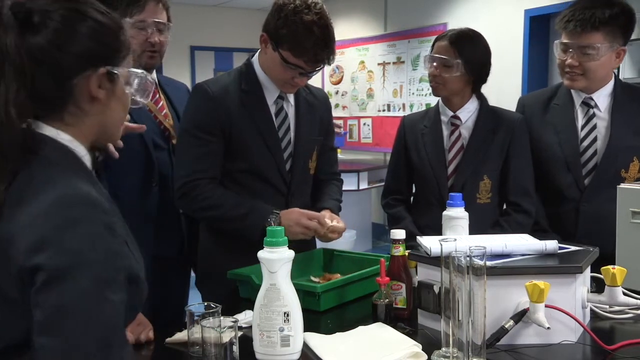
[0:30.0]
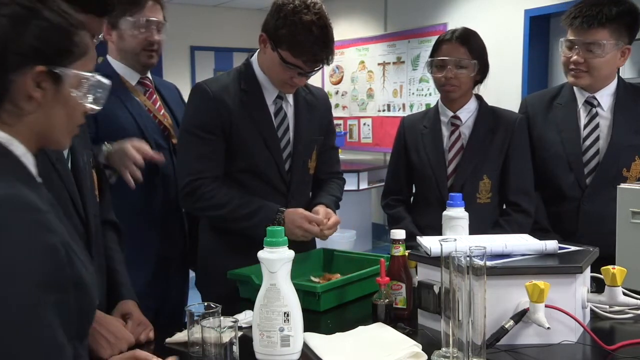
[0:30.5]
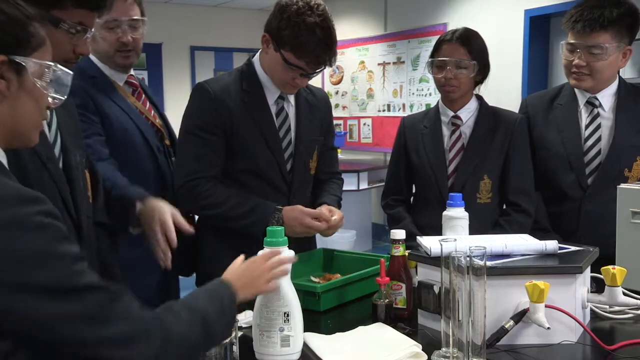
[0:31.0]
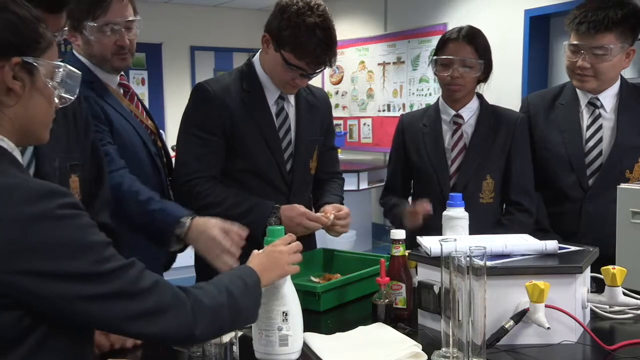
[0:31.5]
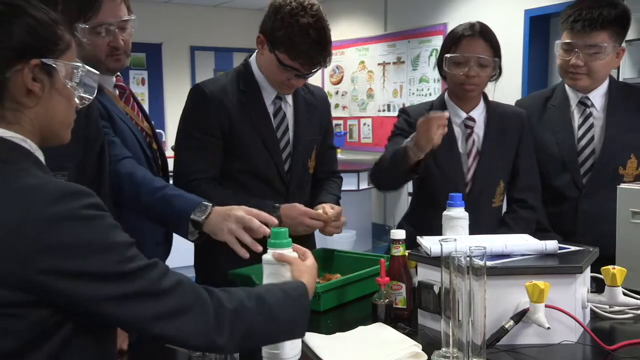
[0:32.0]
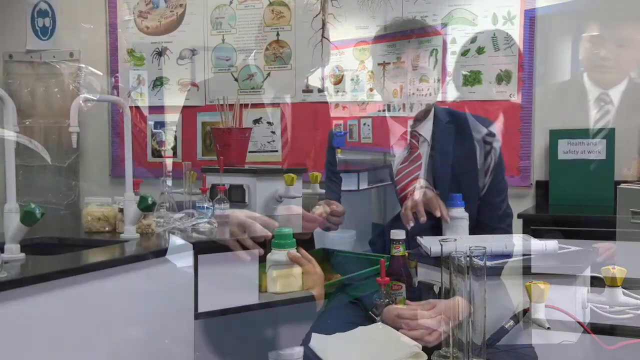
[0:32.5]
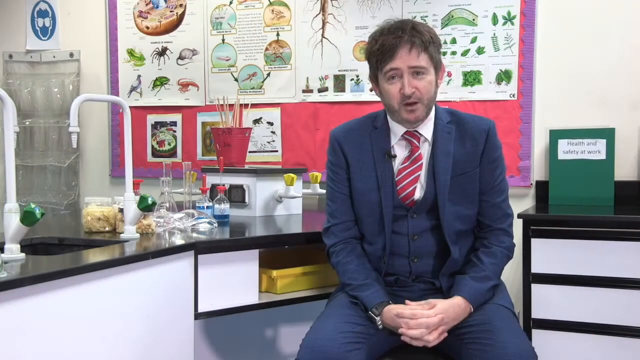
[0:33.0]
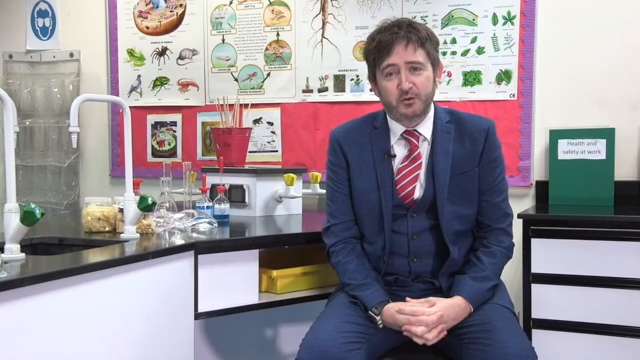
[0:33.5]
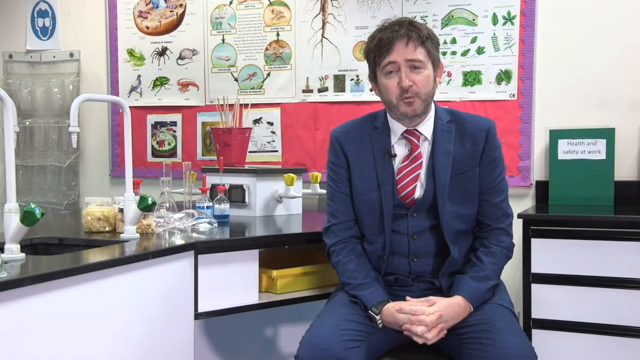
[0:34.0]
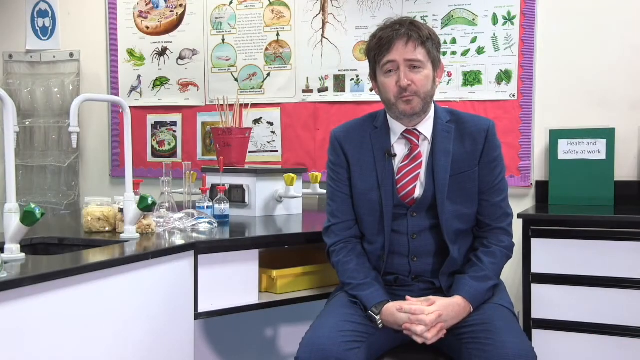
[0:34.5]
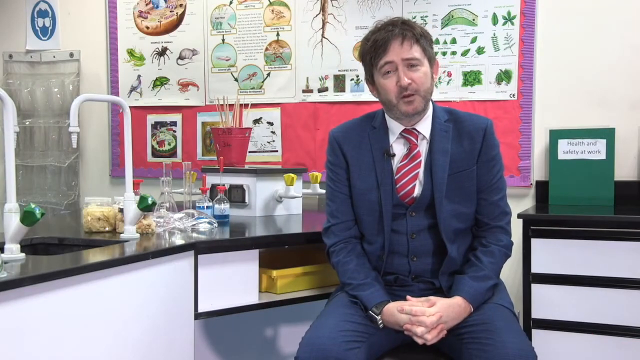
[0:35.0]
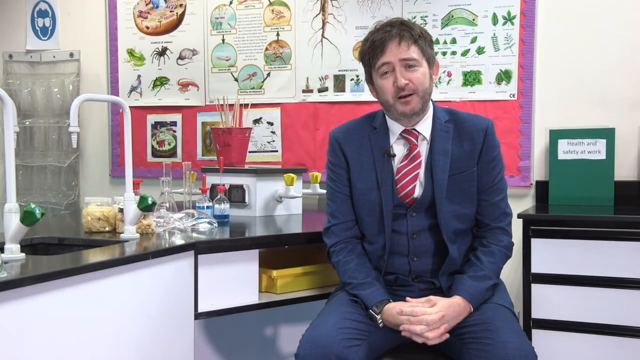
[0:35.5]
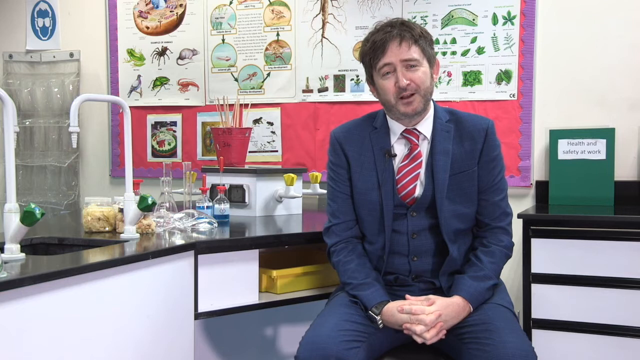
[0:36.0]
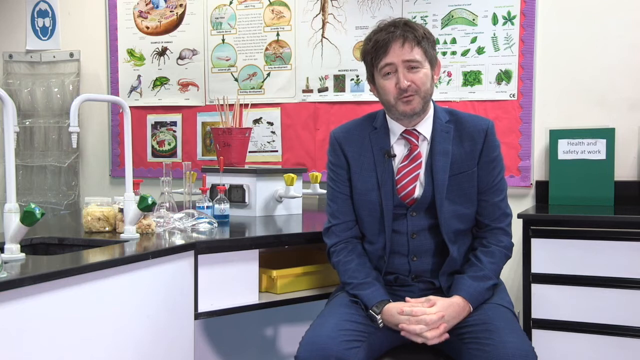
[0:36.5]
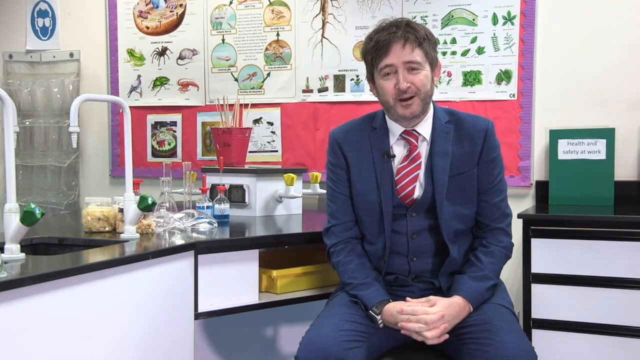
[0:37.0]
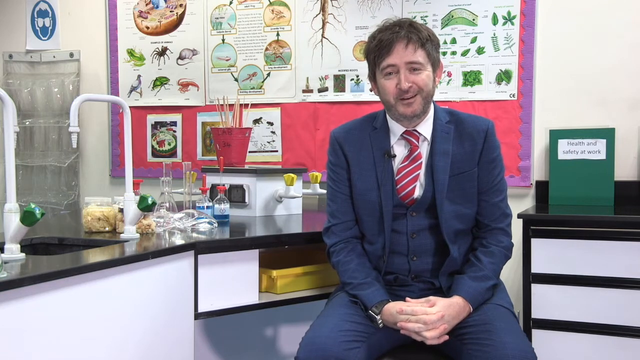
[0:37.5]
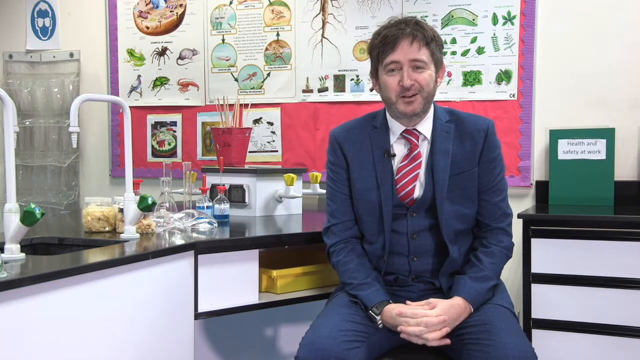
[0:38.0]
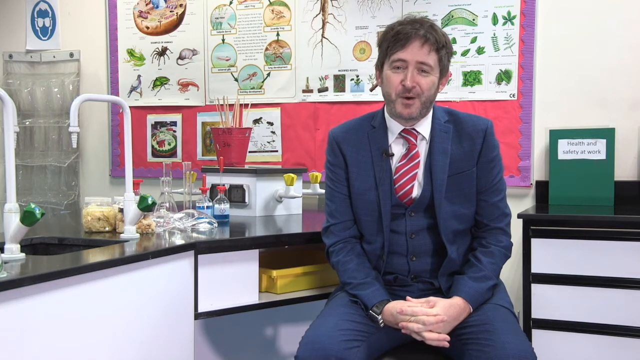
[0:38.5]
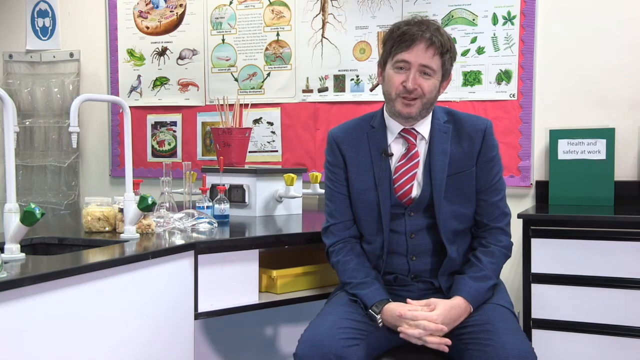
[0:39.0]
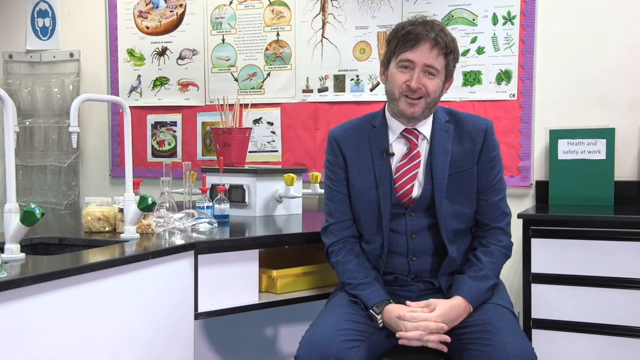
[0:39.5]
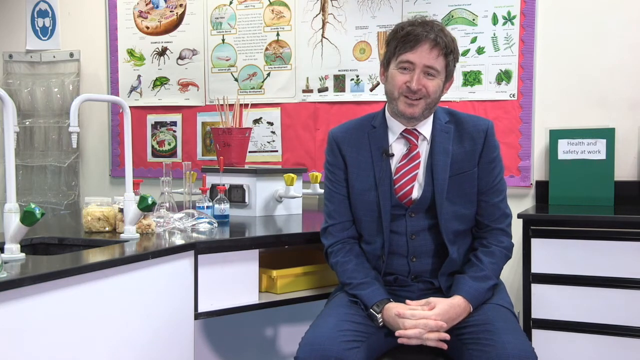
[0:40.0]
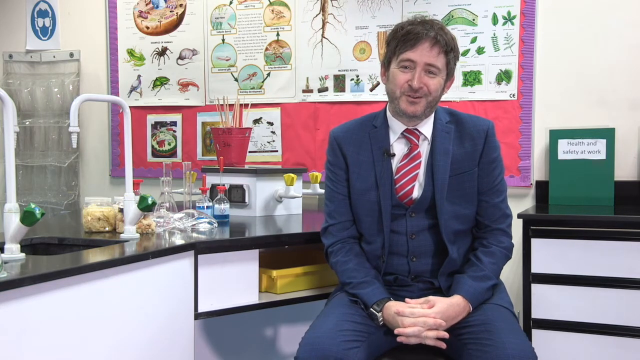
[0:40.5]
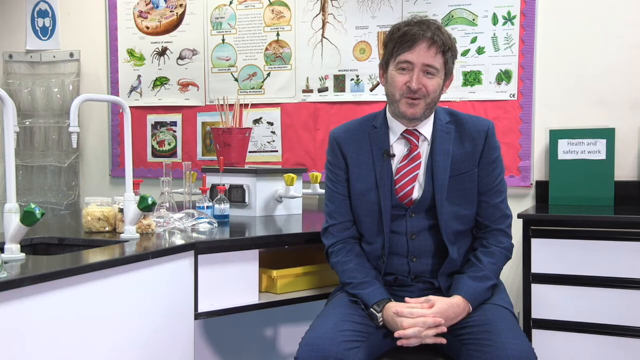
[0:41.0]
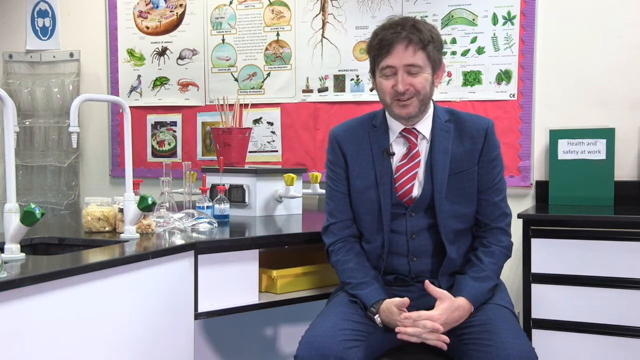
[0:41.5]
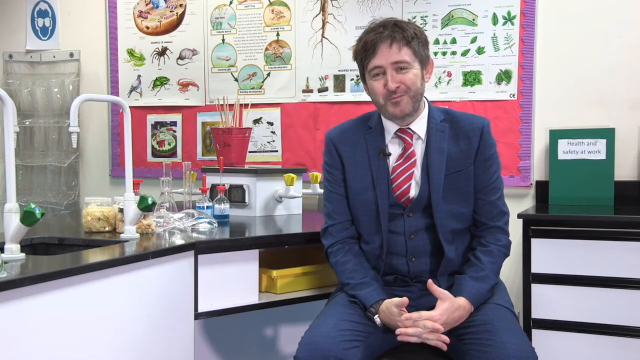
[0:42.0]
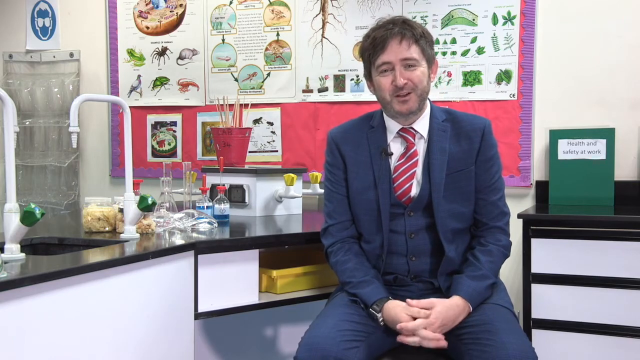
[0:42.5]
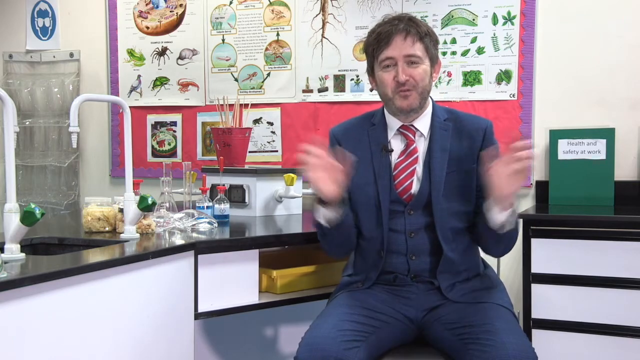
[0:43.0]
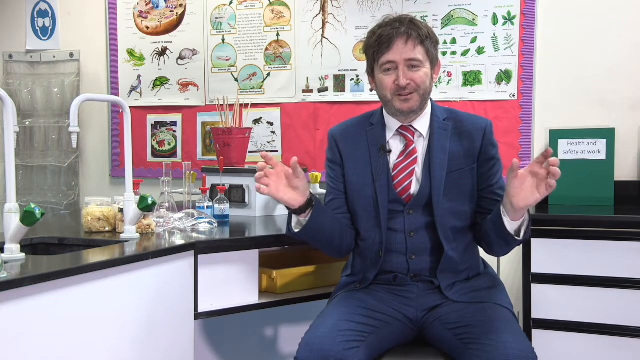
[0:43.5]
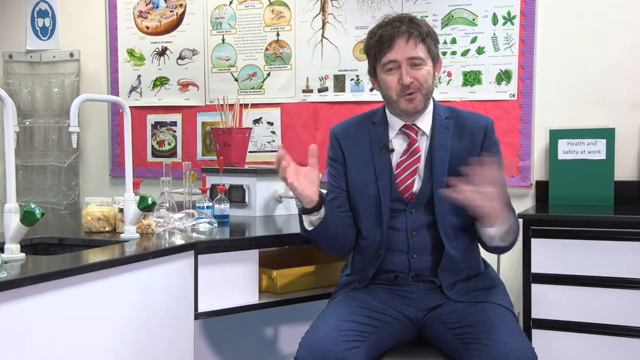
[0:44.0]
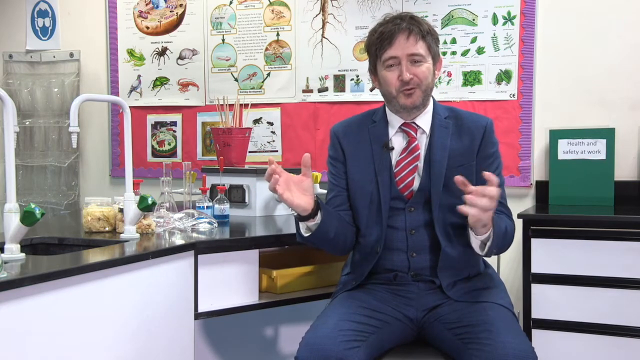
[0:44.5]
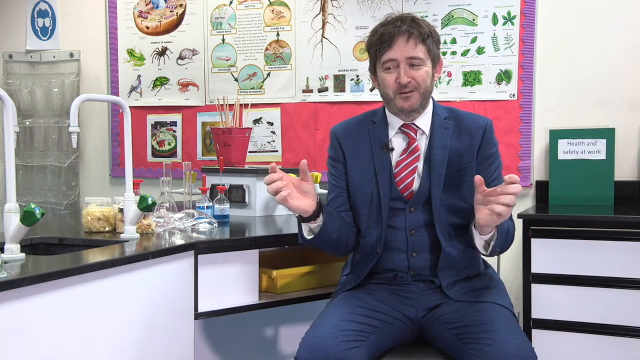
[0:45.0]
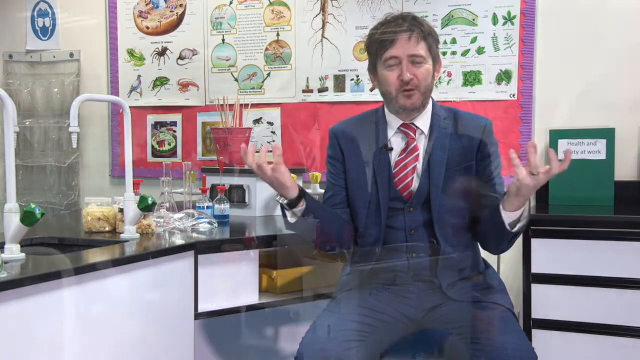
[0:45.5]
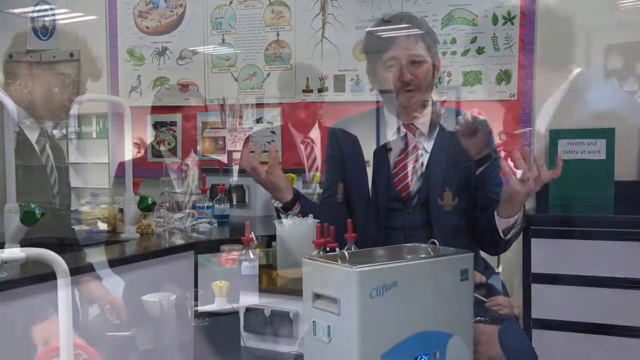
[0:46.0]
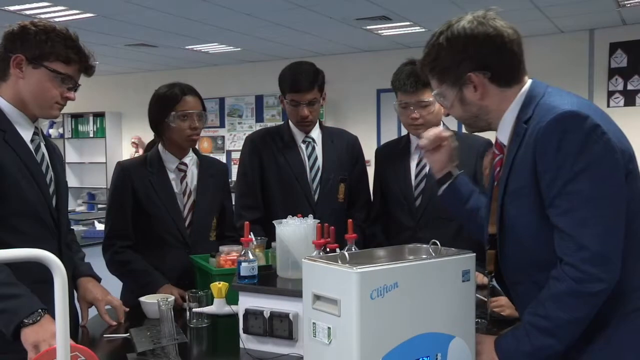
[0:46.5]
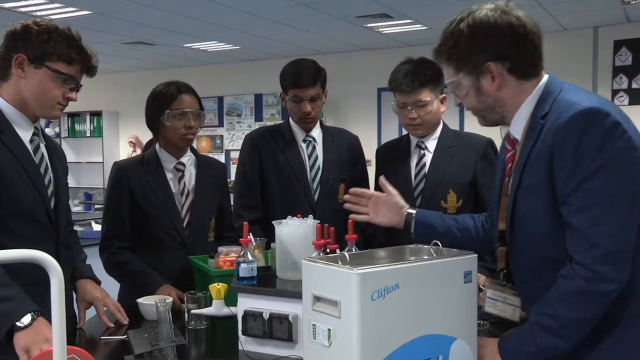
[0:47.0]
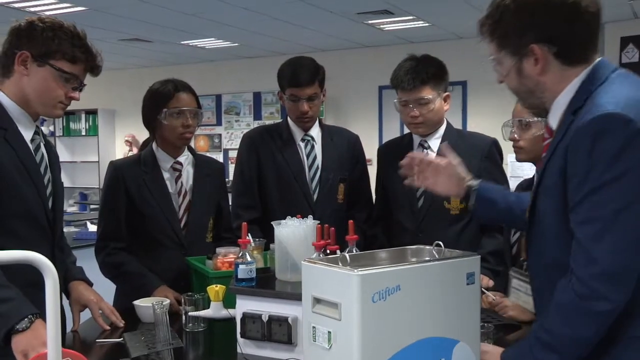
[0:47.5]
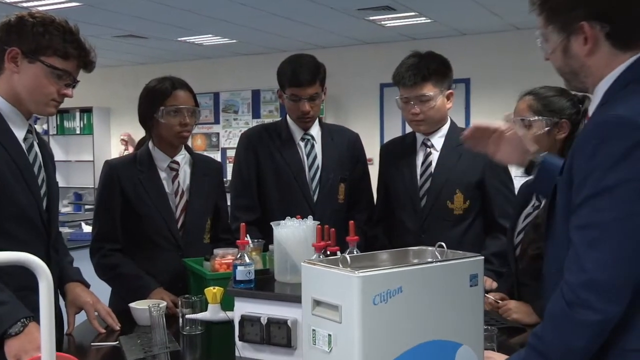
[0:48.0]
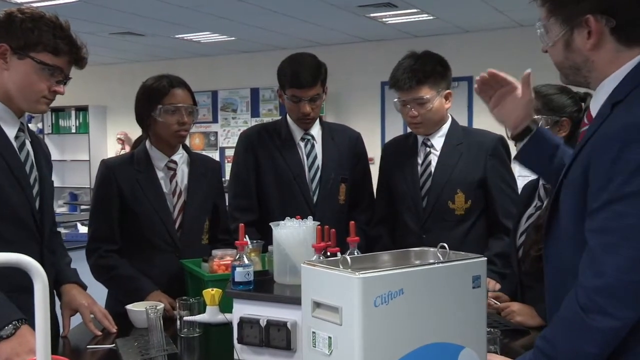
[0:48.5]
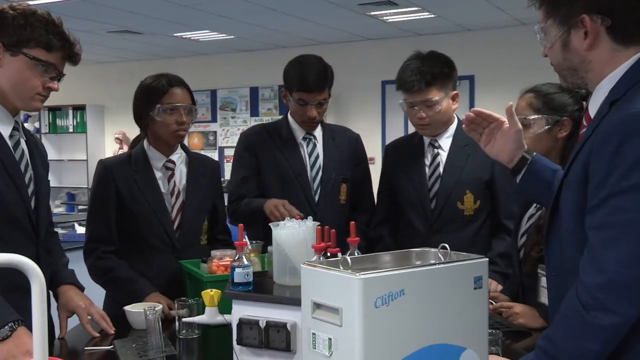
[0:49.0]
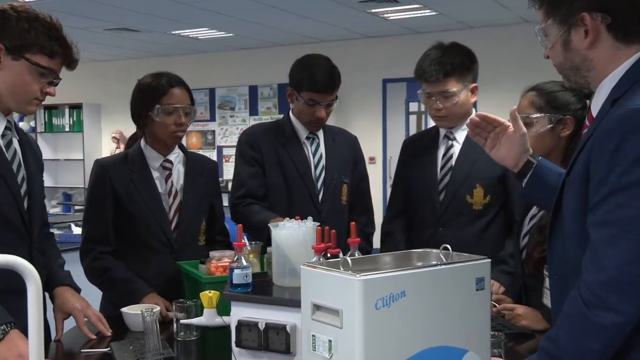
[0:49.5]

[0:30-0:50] What look to be secondary school students in very smart uniforms, possibly from a private school, wear black-and-white horizontally striped ties and protective goggles. They appear to be in a science classroom, perhaps doing a science experiment, and a teacher behind them appears to be instructing them on what to do. The video switches to a man who looks to be a teacher, in a three-piece suit, sitting on a stool in the classroom and talking to the audience. He has a smiley face and messy hair, his head bobs from left to right, he is smiling, and he uses his hands while talking. The video then goes back to the students: five of them, two girls and three boys, with the man who looks to be a teacher talking to them.